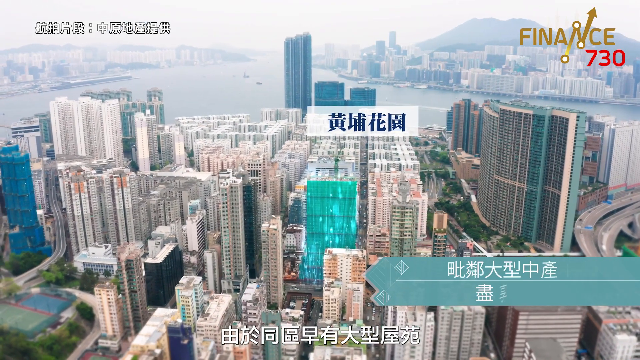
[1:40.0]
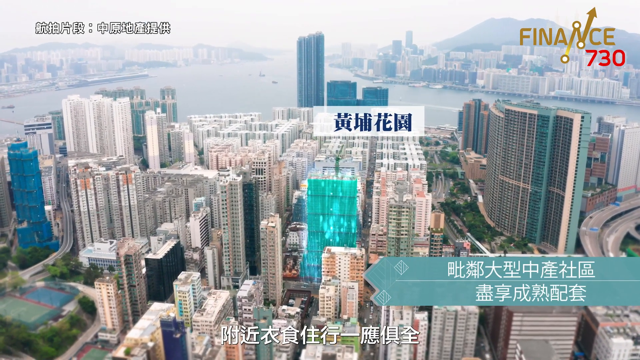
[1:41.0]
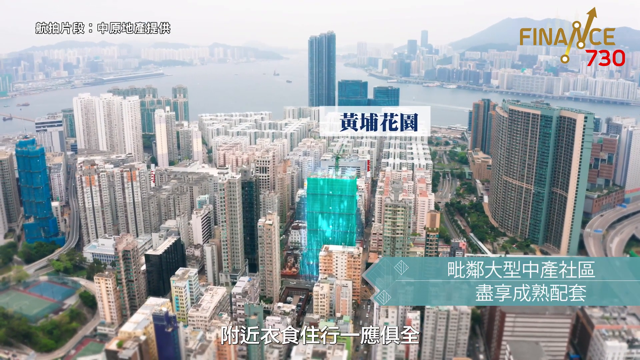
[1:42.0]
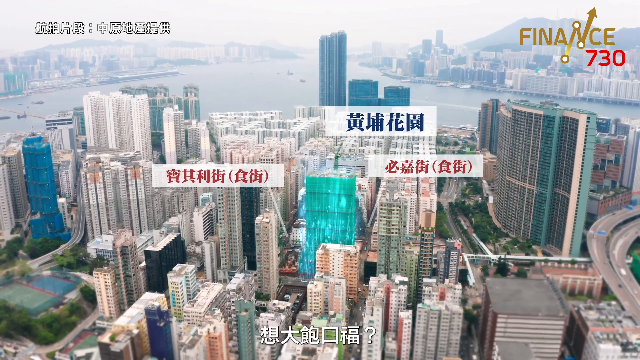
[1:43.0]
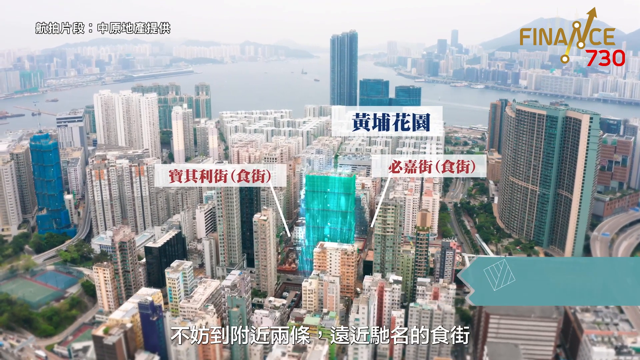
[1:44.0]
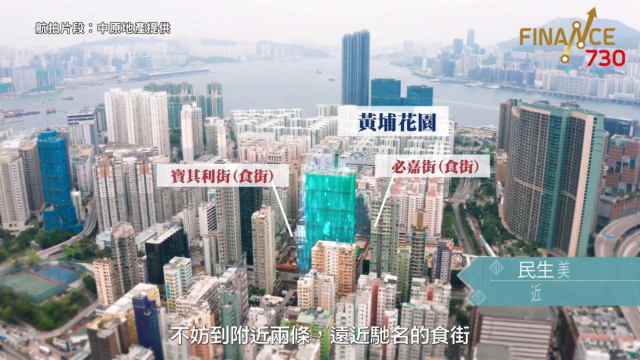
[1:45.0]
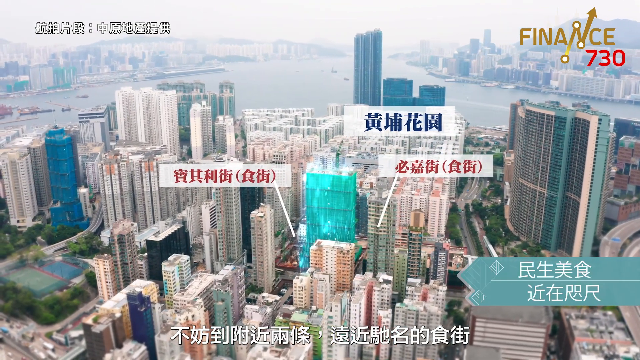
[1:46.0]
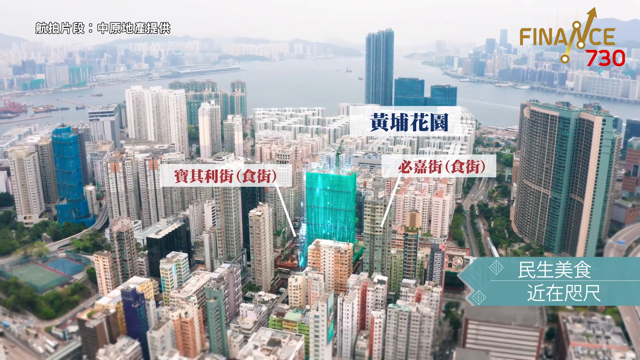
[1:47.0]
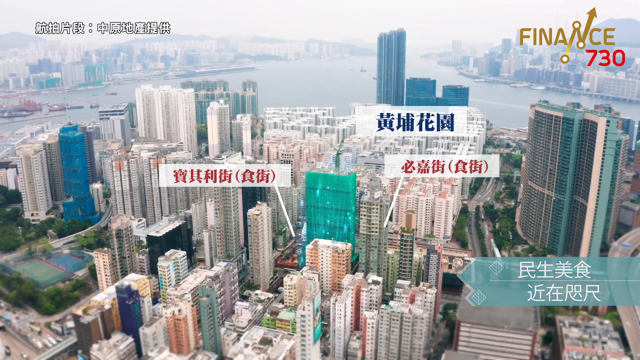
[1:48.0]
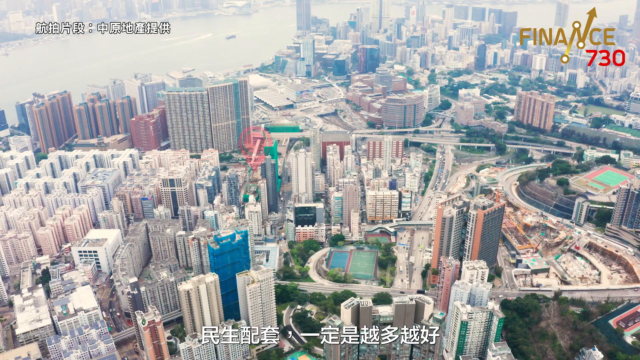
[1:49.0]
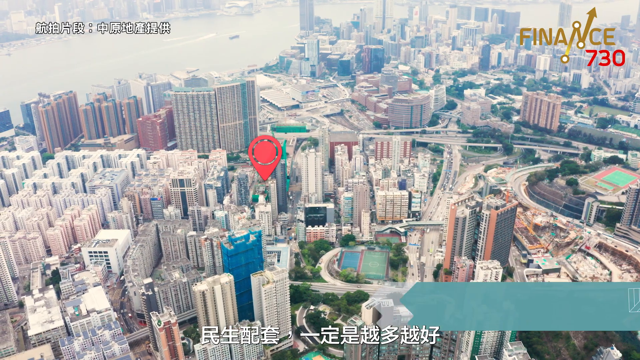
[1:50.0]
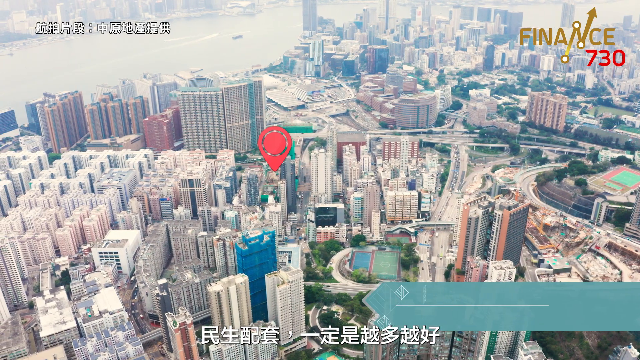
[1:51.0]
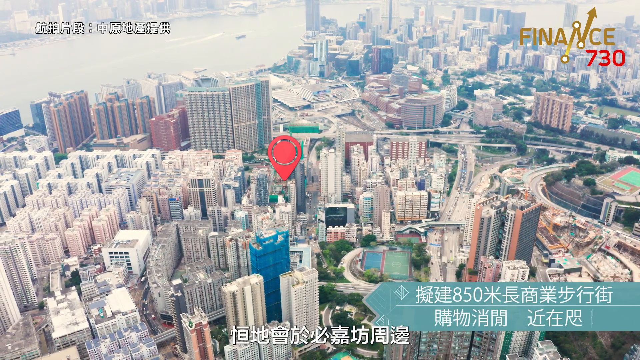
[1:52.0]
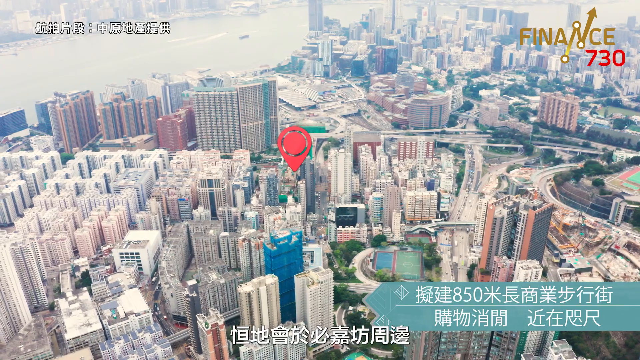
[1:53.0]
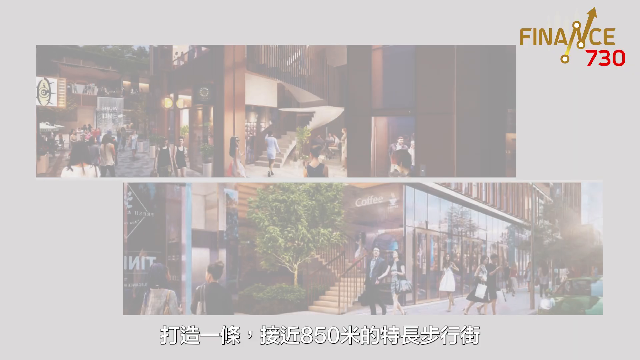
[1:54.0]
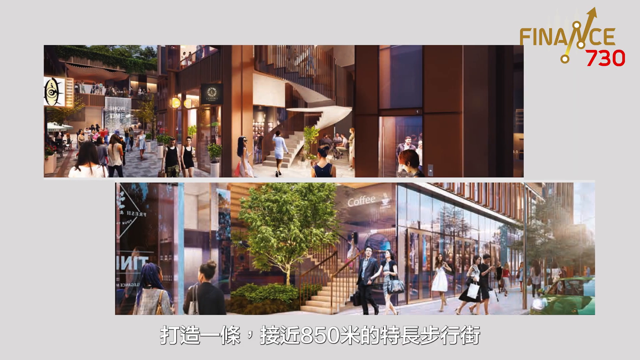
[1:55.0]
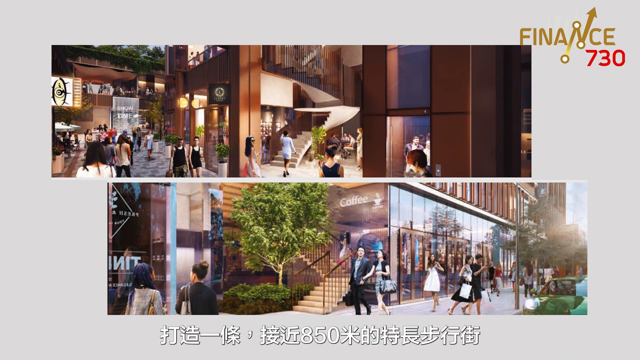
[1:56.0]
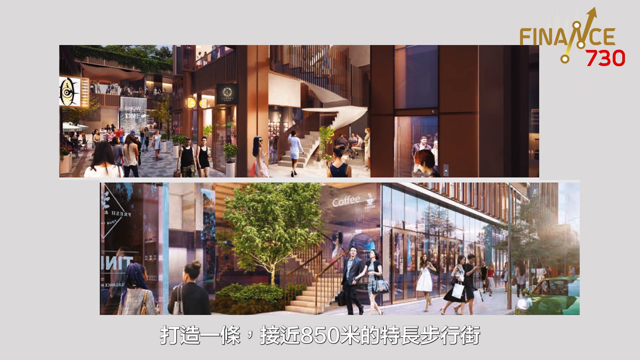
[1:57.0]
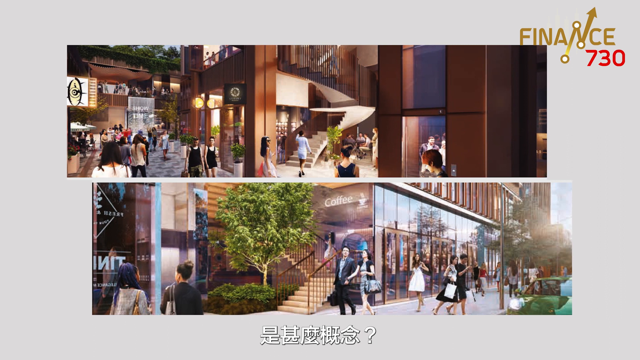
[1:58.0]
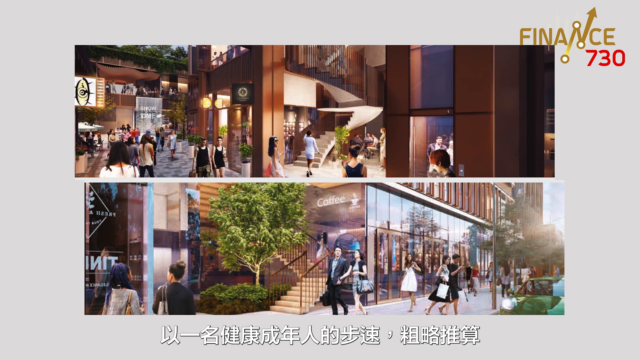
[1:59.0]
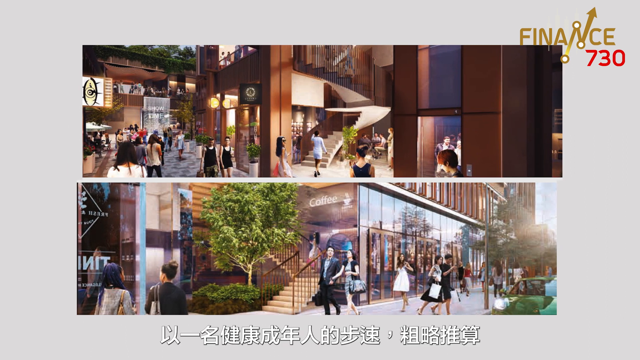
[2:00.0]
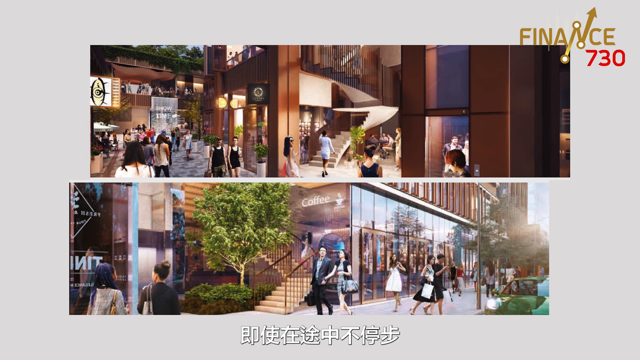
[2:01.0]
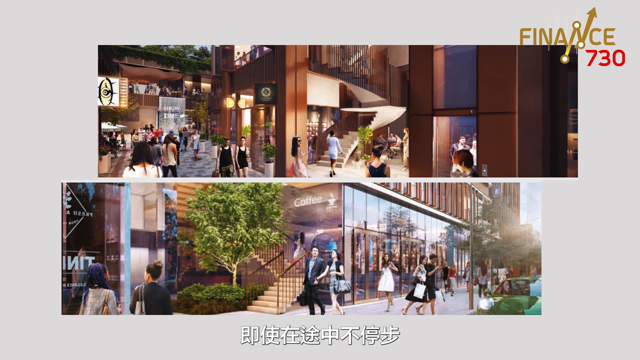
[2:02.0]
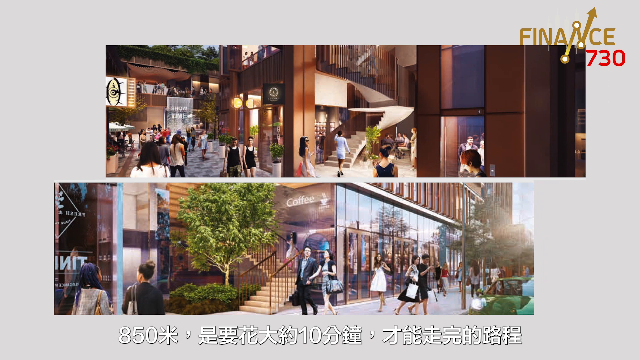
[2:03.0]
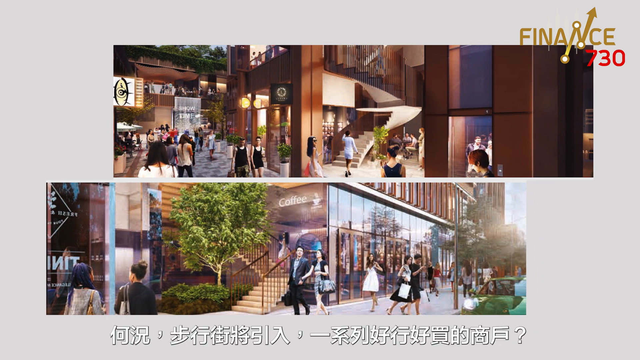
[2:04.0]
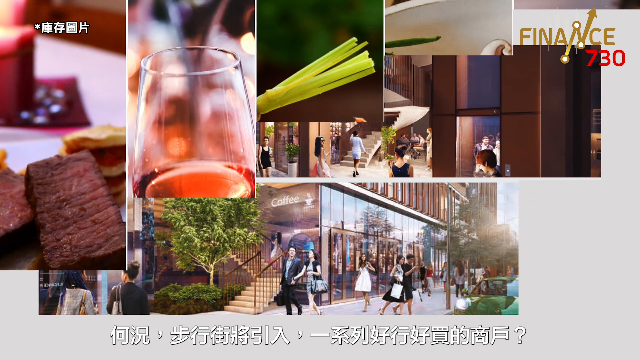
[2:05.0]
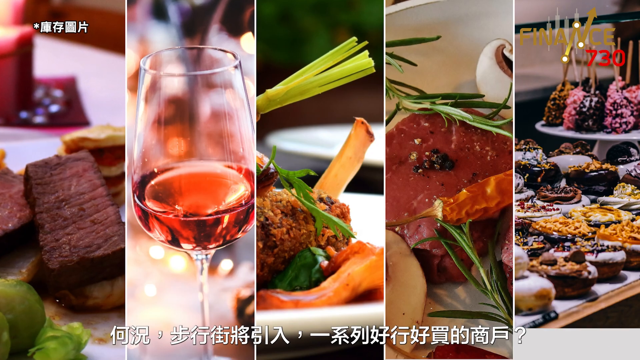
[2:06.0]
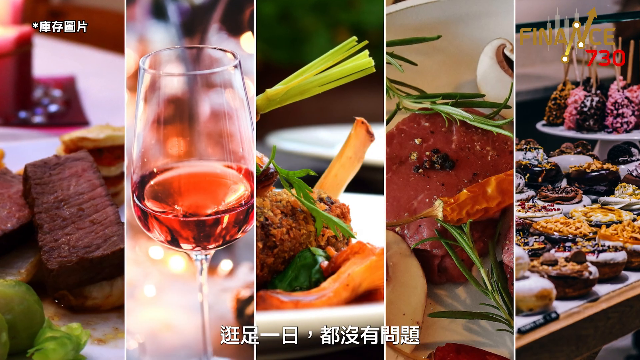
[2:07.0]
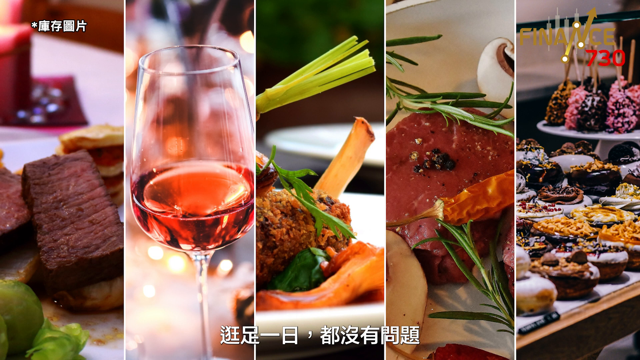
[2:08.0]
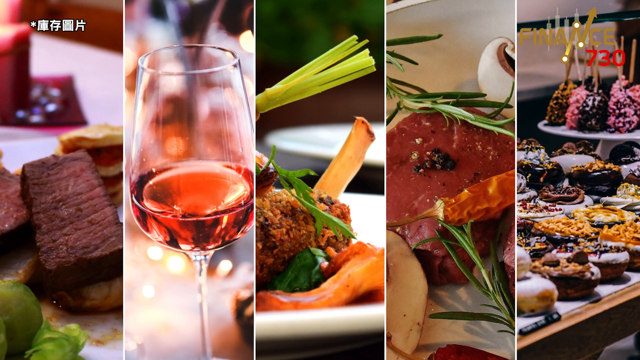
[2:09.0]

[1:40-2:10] An overhead view shows what appears to be Hong Kong, with lots of tall high-rise buildings and a waterway. Words in an Asian language that cannot be read flash across the top of the screen. Location pins appear, apparently marking the two areas called Baker Circle. The view switches to kind of an exterior view, like a prototype of what the buildings look like, with people walking on the street outside past them. Entrances, various steps and lots of glass windows are visible. Then pictures of food are shown, suggesting there may be a restaurant inside; there looks to be steak and wine, maybe a rack of lamb, and various items on different racks of food.